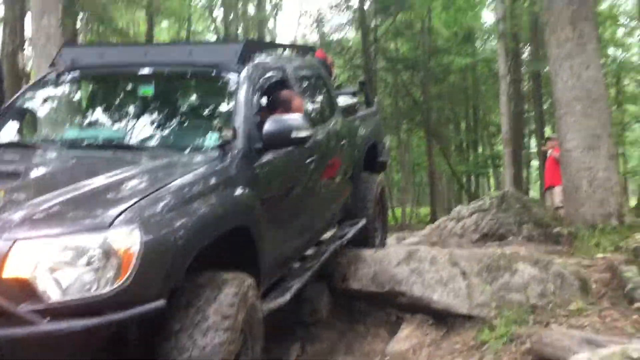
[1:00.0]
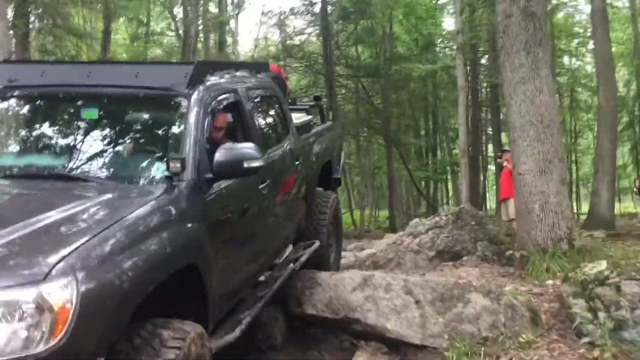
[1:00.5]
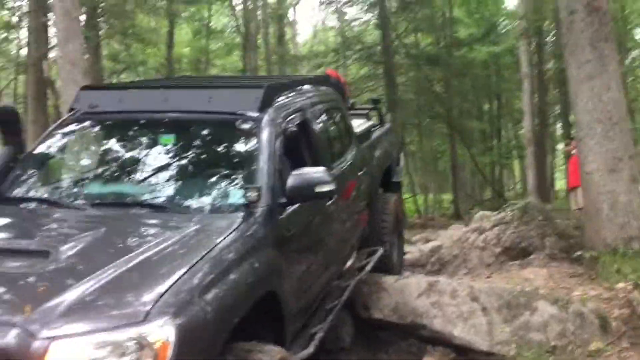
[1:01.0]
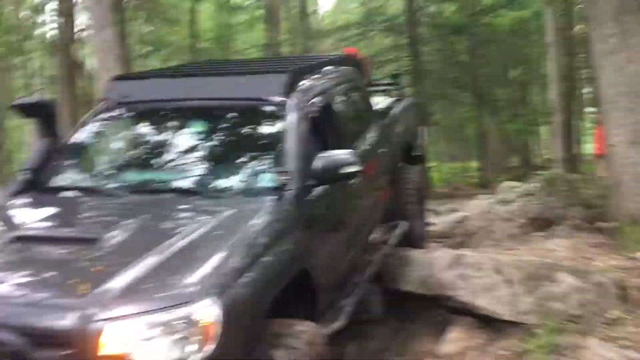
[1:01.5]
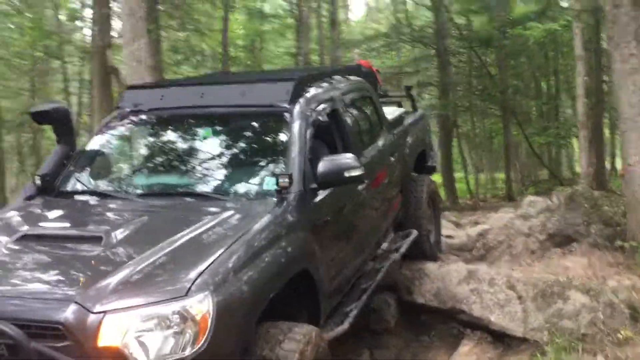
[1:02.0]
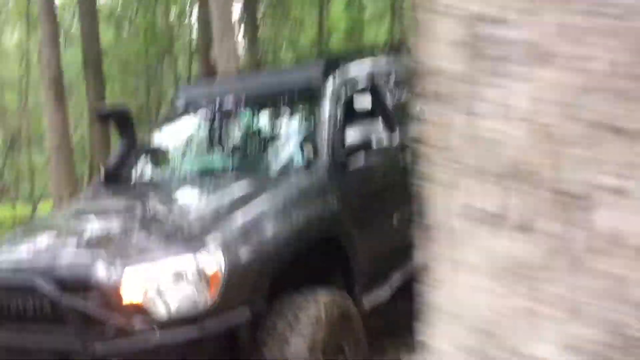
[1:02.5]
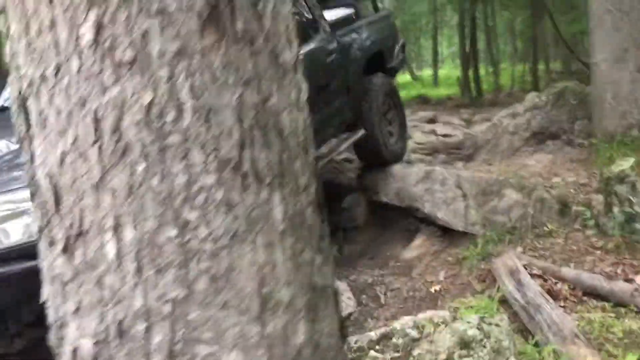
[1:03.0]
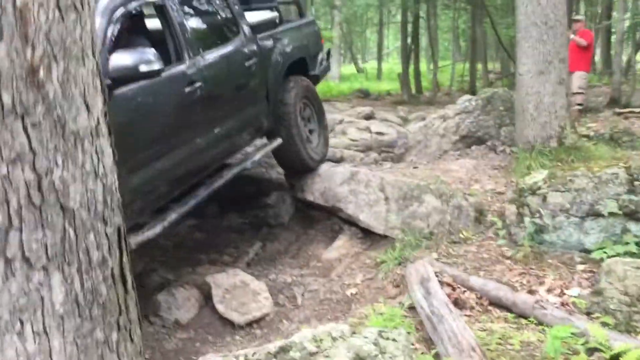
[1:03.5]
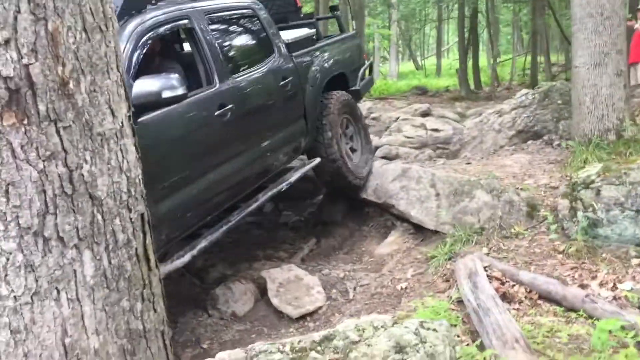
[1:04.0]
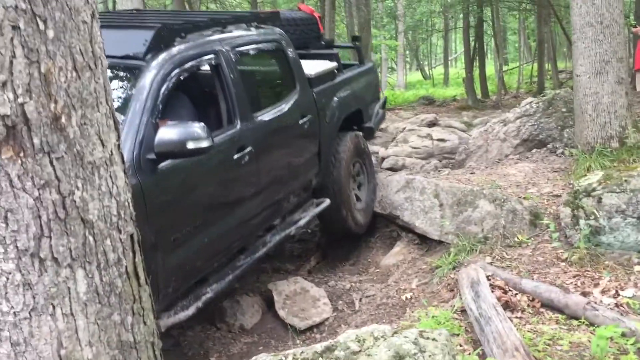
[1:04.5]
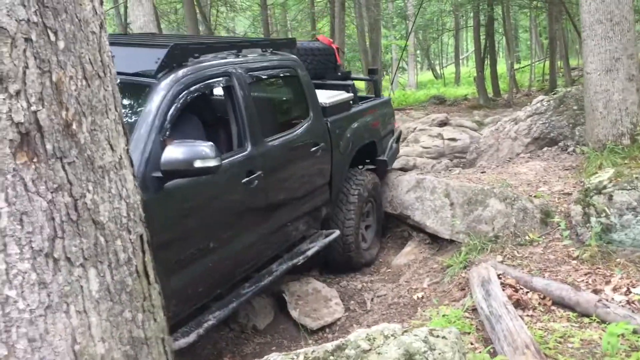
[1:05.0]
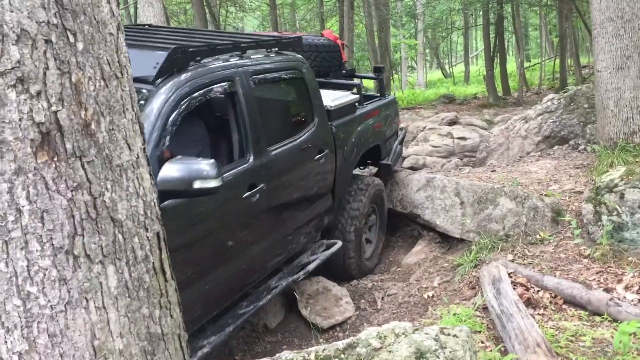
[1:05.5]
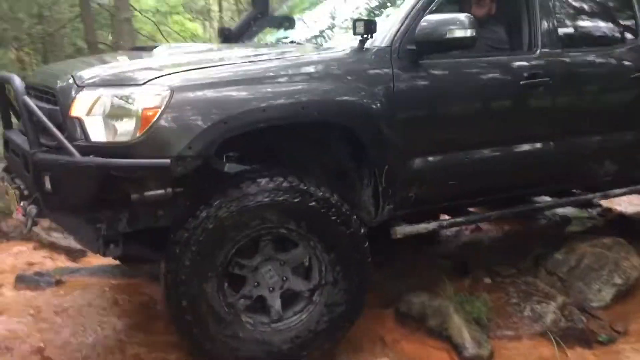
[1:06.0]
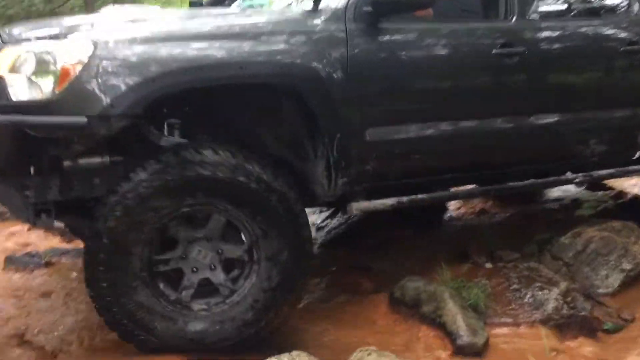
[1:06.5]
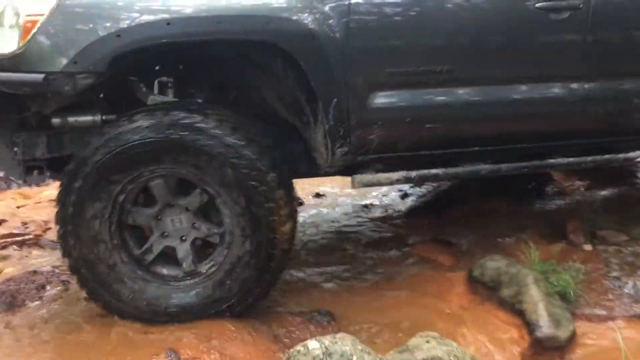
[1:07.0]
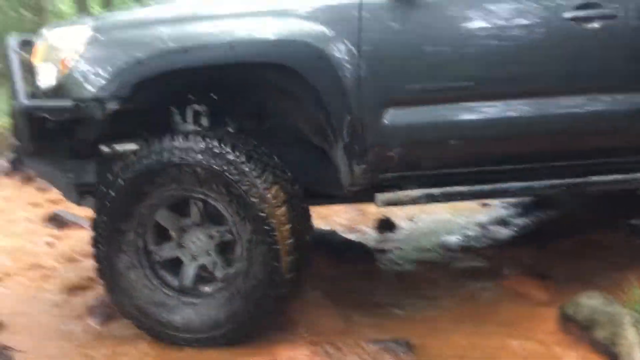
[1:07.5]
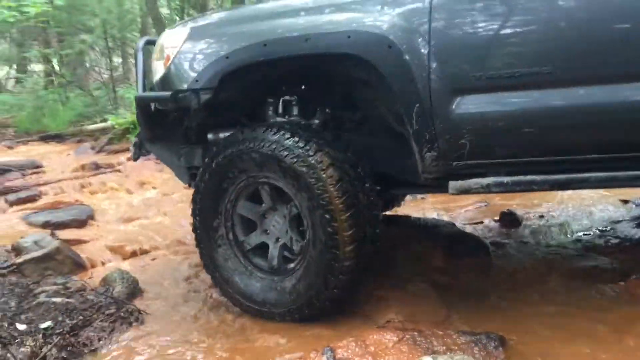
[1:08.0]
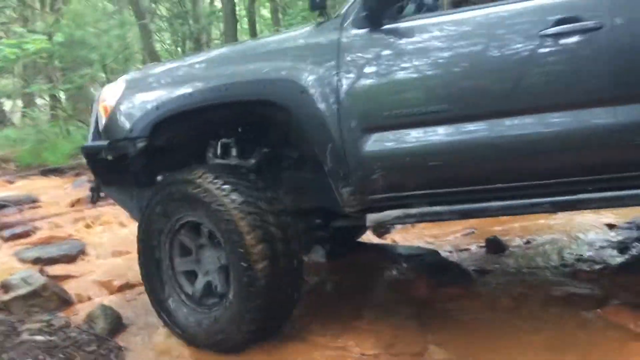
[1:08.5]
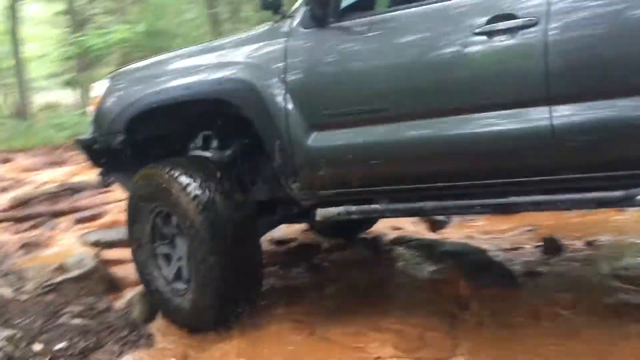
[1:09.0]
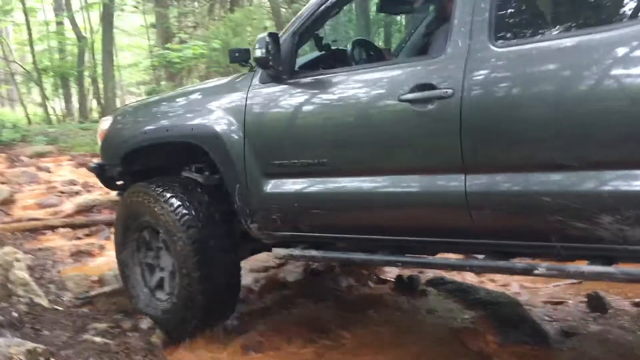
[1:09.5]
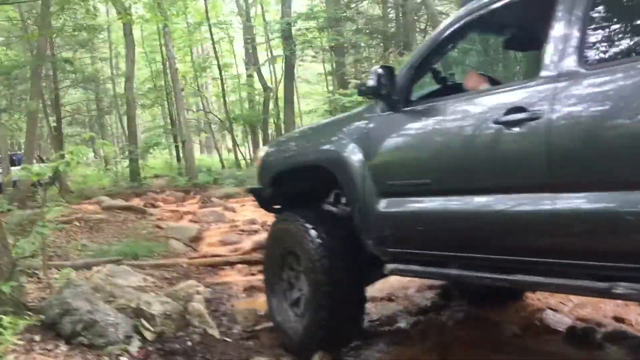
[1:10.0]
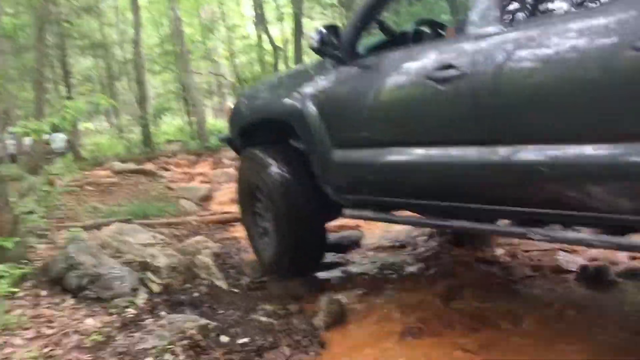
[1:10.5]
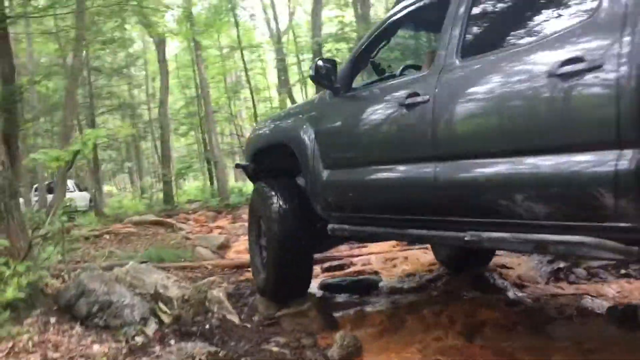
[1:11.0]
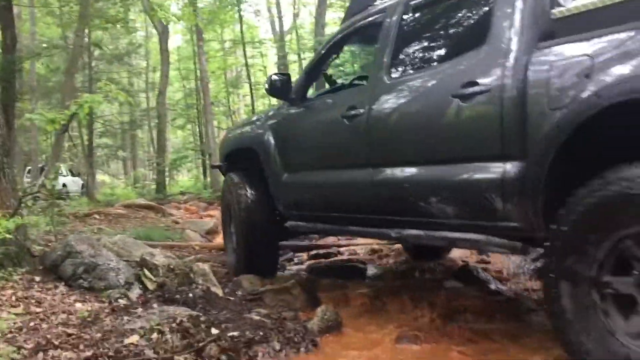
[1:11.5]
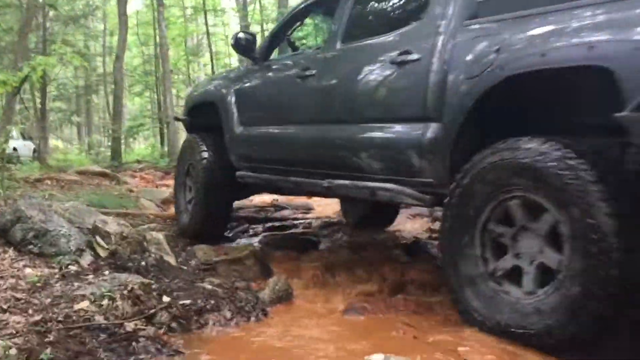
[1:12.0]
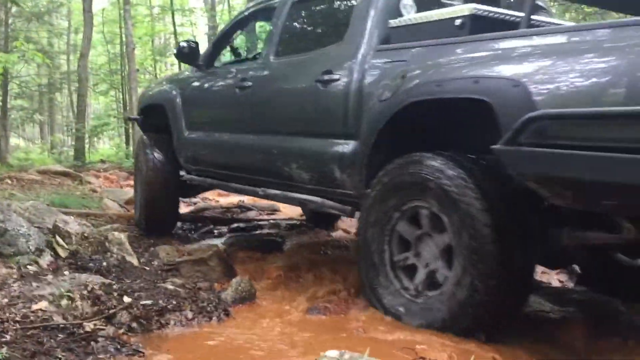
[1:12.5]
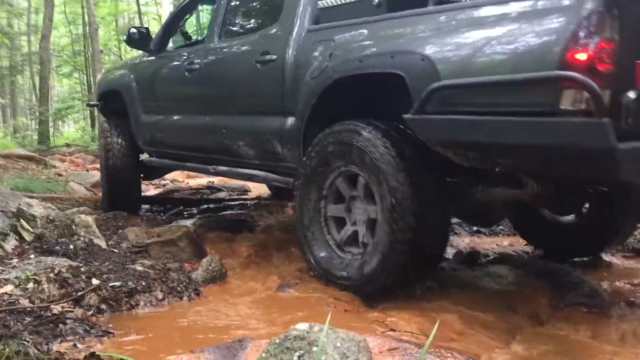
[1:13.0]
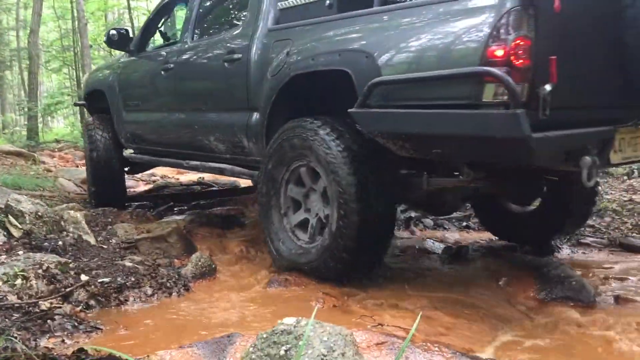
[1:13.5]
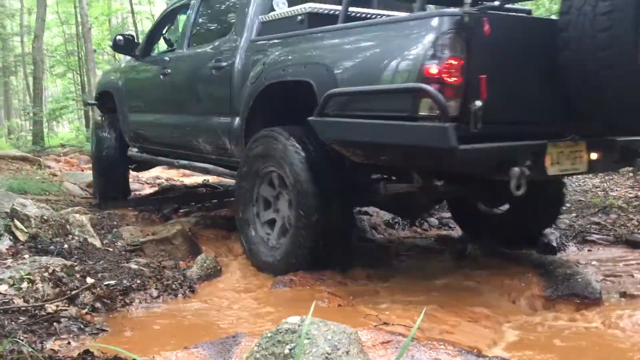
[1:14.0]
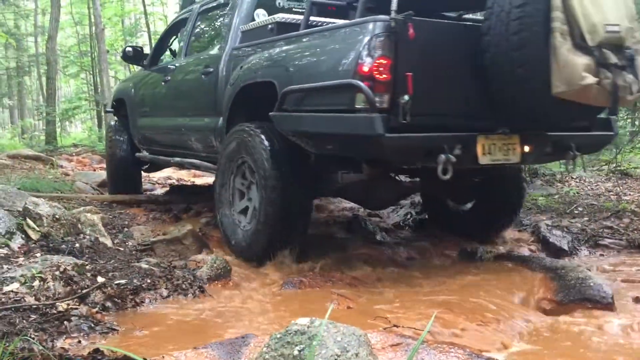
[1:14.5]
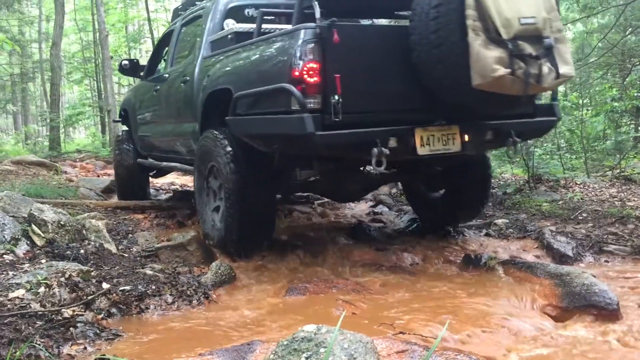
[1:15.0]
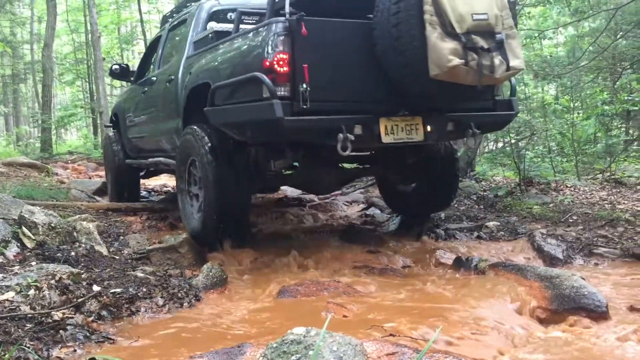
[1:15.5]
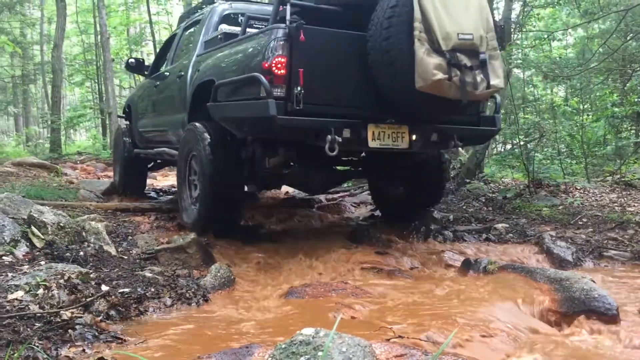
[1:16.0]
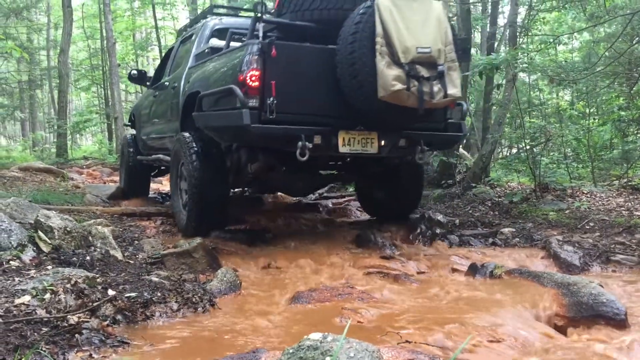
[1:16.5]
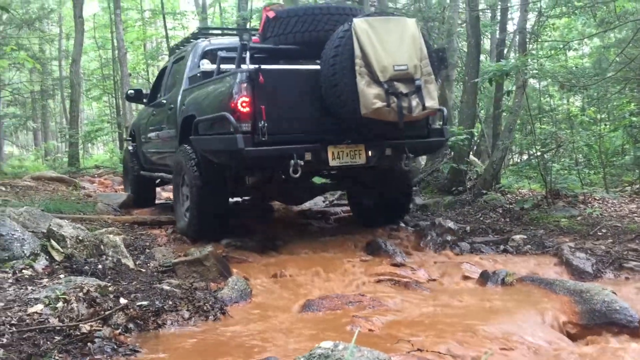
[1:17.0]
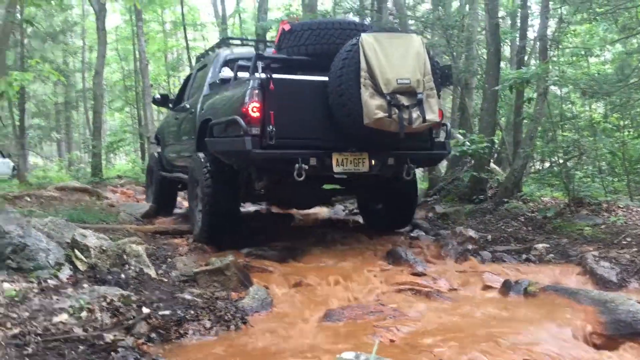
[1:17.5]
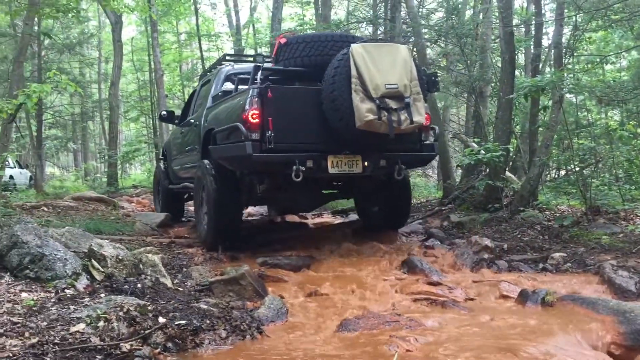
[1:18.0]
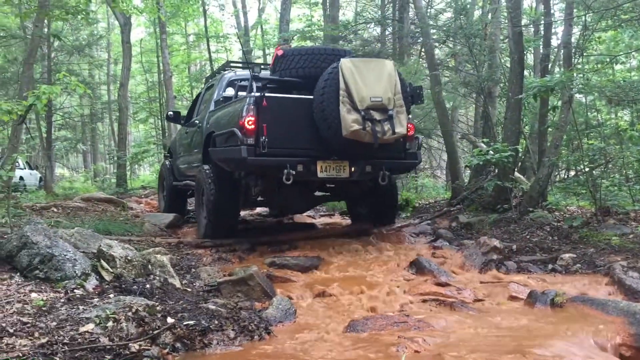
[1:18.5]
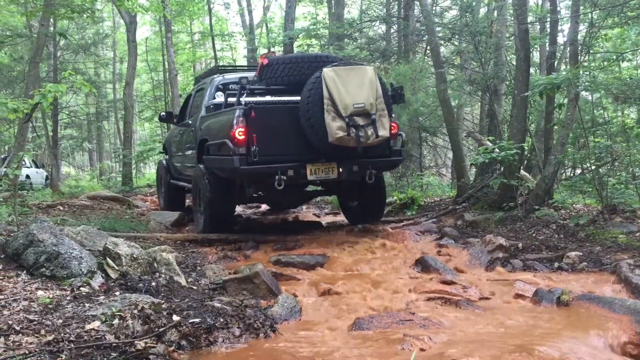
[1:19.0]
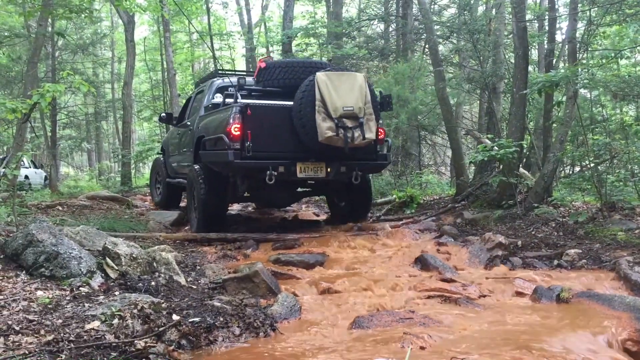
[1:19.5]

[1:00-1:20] Still in the wooded area, the man in the red shirt outside the truck is lined up with a tree, so he is kind of partly behind it. Of the truck's front end, only the driver's side front headlight and the top of the driver's side front wheel are visible. The guardrails on the lower side drag on the rocks a little. The man is leaning out the right side window looking back at the tires because of the dragging. Sunlight reflects off the front windshield and the hood. The truck barely moves forward little by little. The camera in front slightly moves to the right and goes behind a tree, showing the two side doors and the back of the truck as the back tire is on a big jagged rock sticking up. The truck slowly moves off it, and as it comes down the back end barely touches the rock. The video cuts to a side shot showing the front fender, the front wheel, and a little of the driver's side door, with the window cut off at the top. The truck goes through a little mud puddle, kind of a little creek, slowly. As it goes left, the camera kind of pans behind it a little. The truck bounces back and forth as it hits the rocks, and the water looks pretty muddy and dirty. The truck pulls off, kind of going into the picture to the left, with the cameraman now behind it.